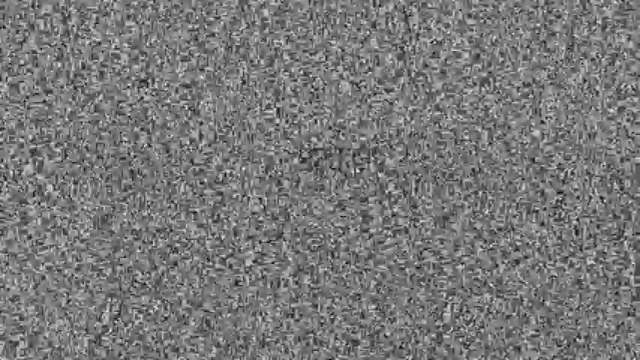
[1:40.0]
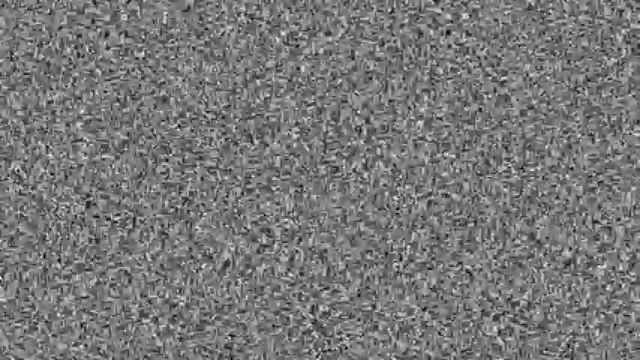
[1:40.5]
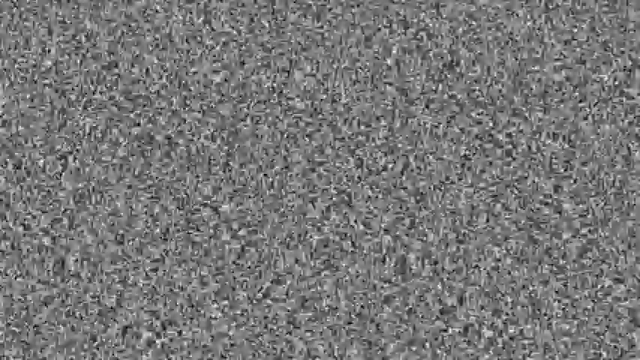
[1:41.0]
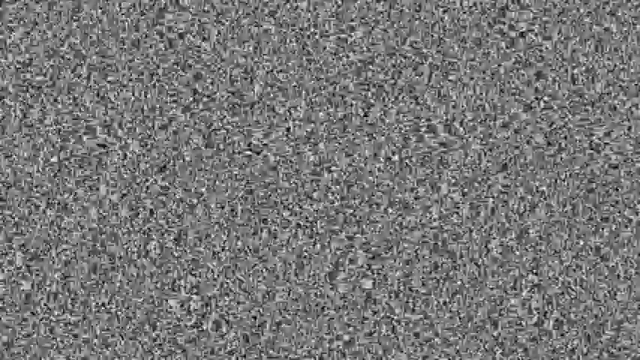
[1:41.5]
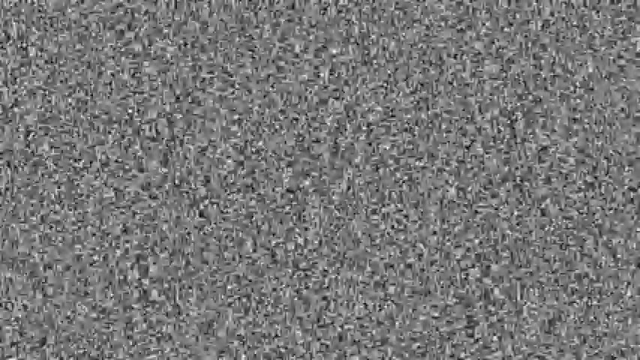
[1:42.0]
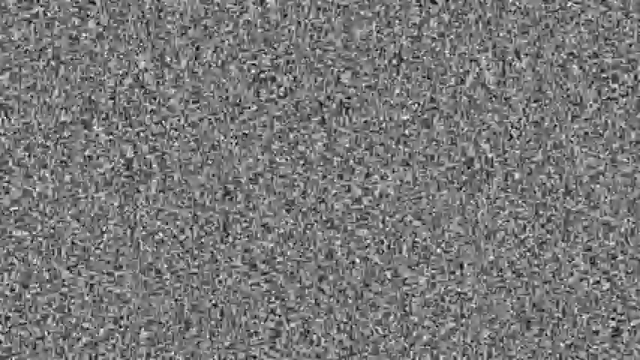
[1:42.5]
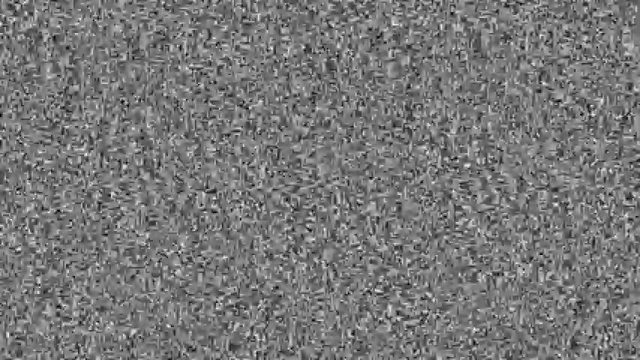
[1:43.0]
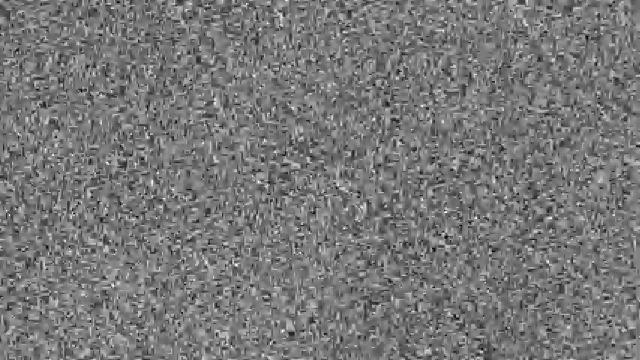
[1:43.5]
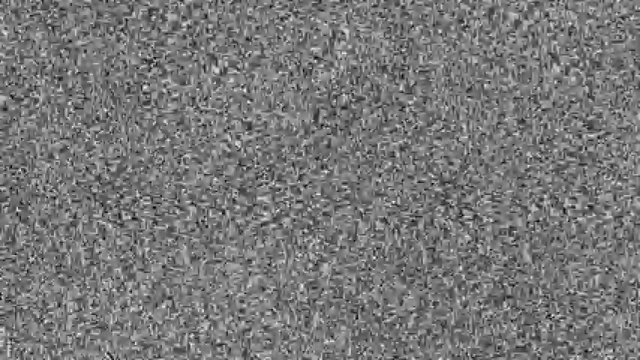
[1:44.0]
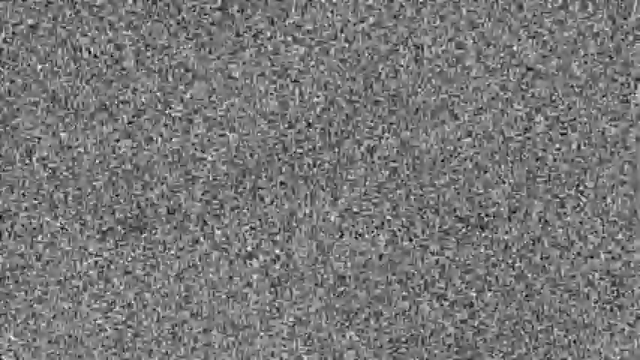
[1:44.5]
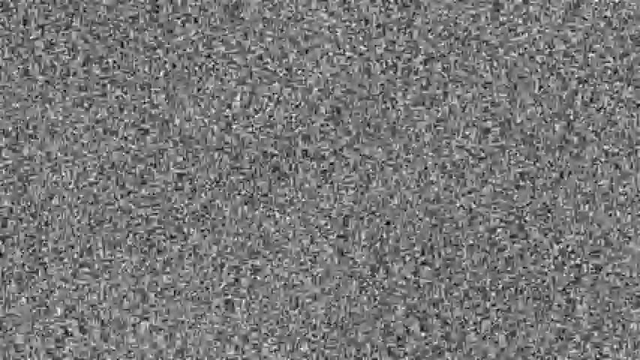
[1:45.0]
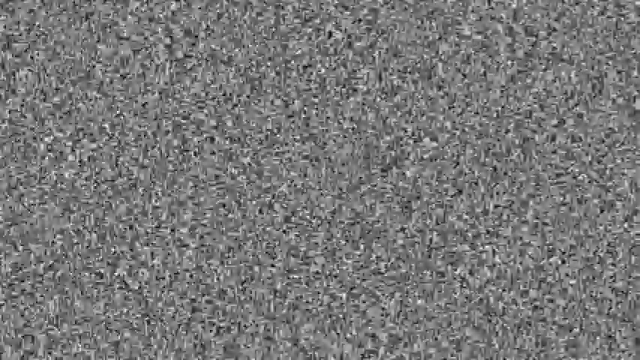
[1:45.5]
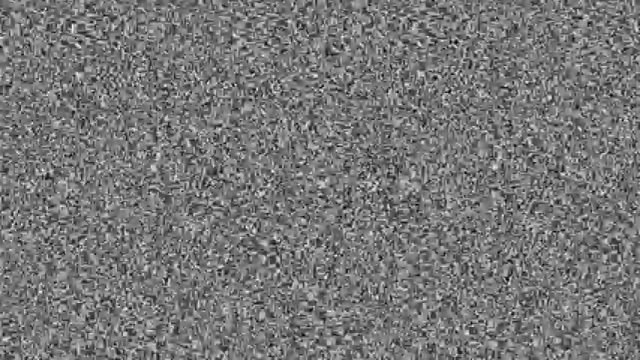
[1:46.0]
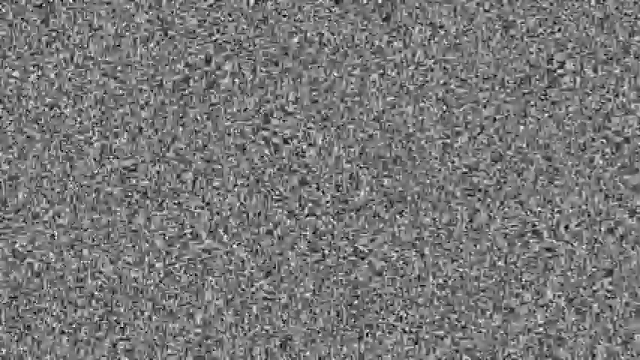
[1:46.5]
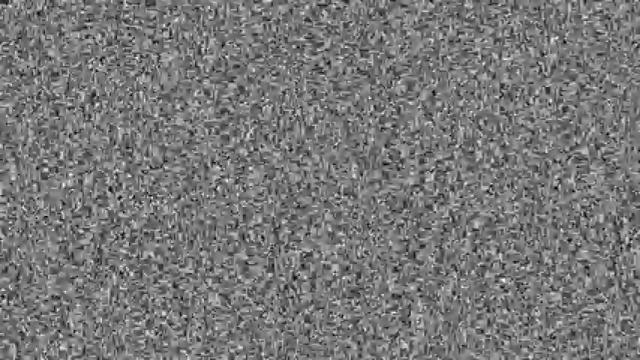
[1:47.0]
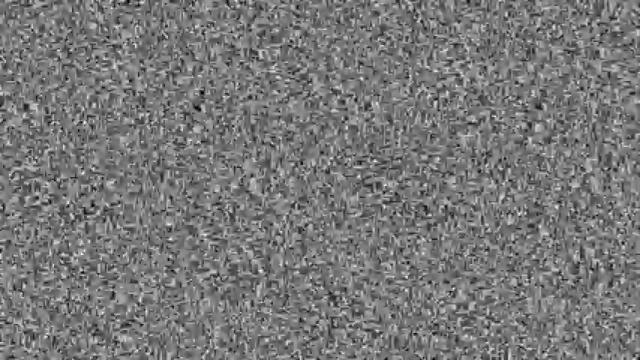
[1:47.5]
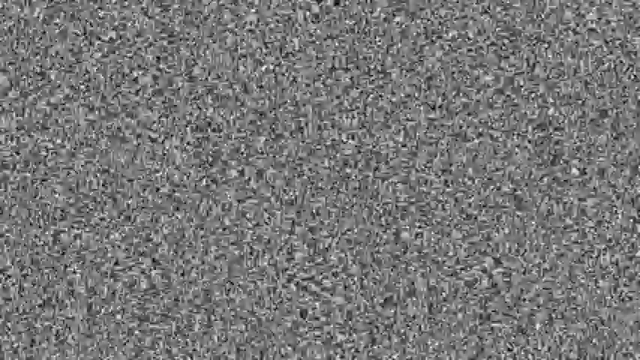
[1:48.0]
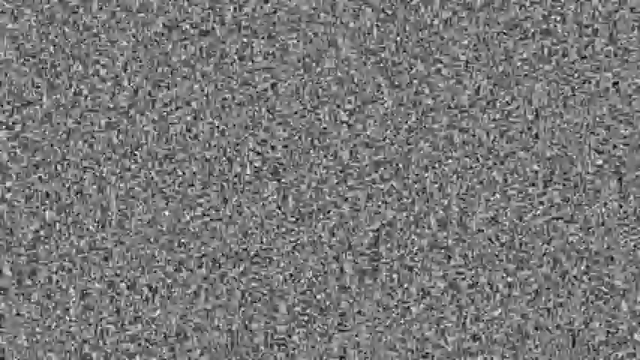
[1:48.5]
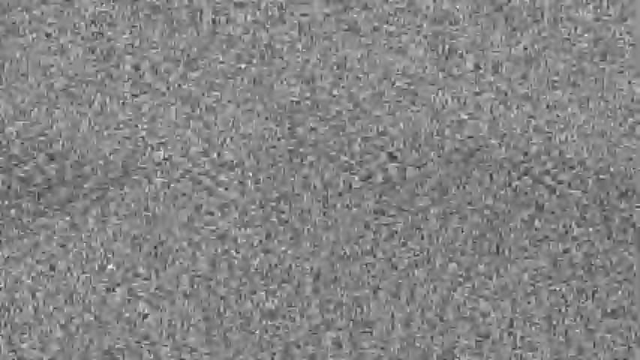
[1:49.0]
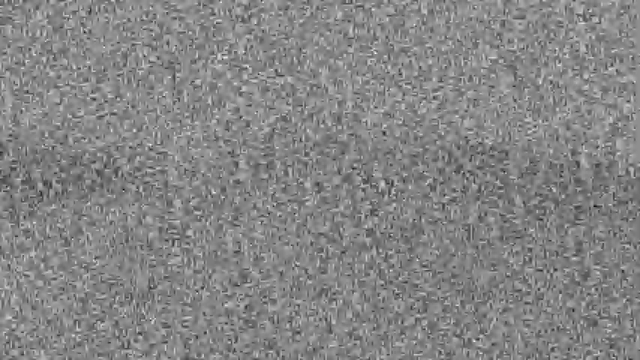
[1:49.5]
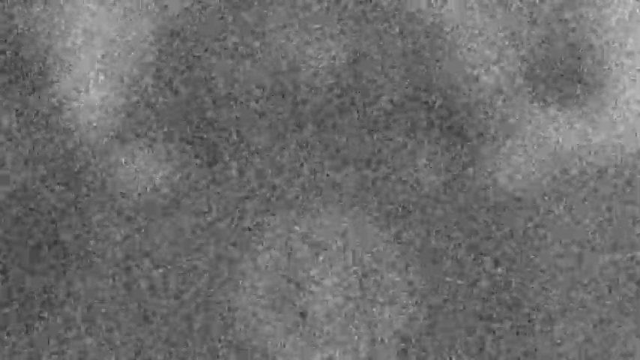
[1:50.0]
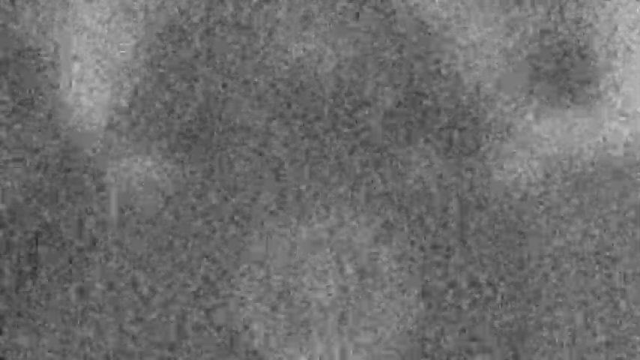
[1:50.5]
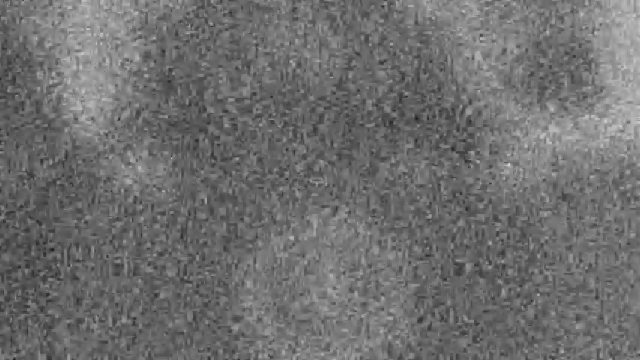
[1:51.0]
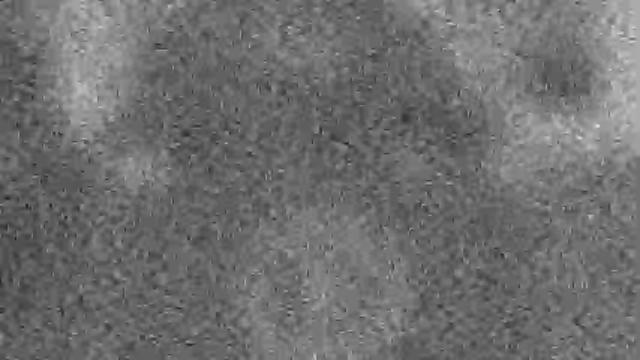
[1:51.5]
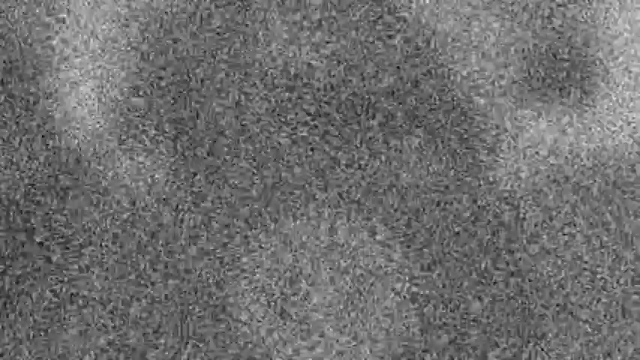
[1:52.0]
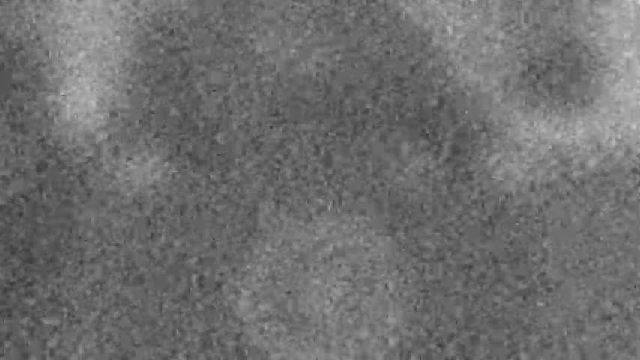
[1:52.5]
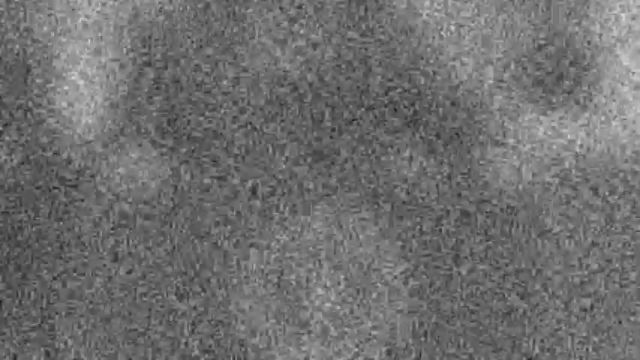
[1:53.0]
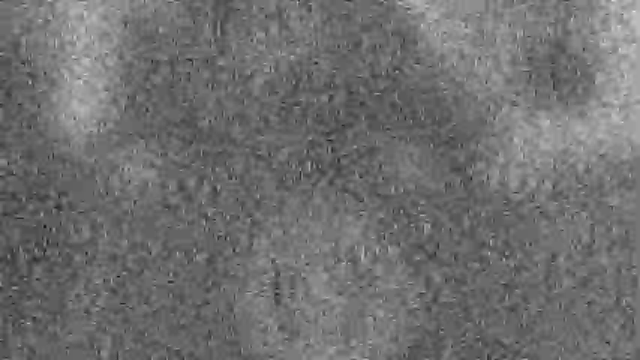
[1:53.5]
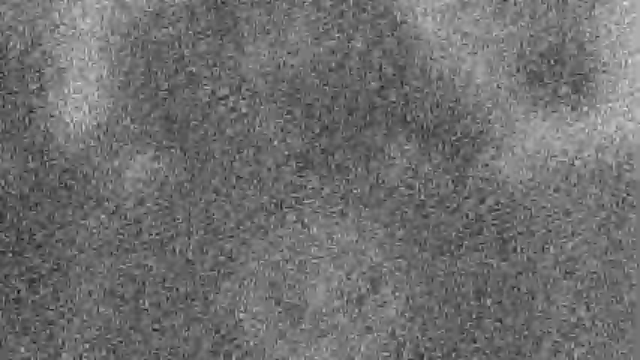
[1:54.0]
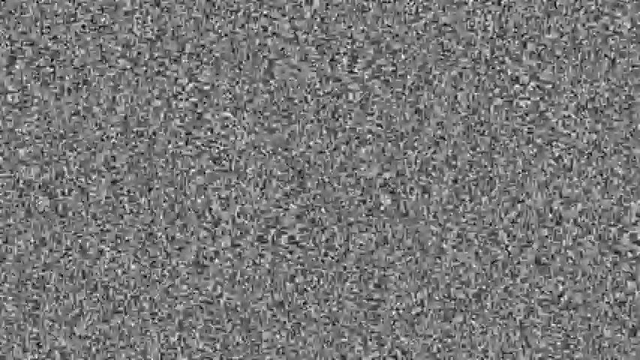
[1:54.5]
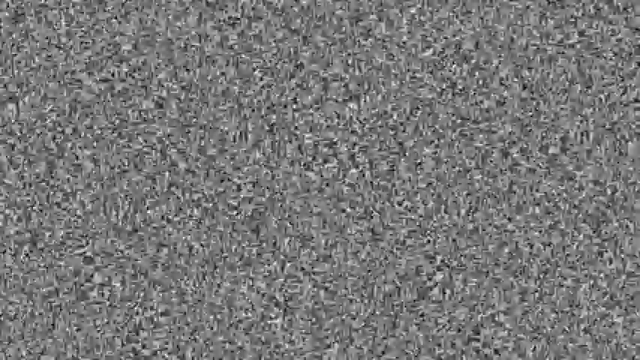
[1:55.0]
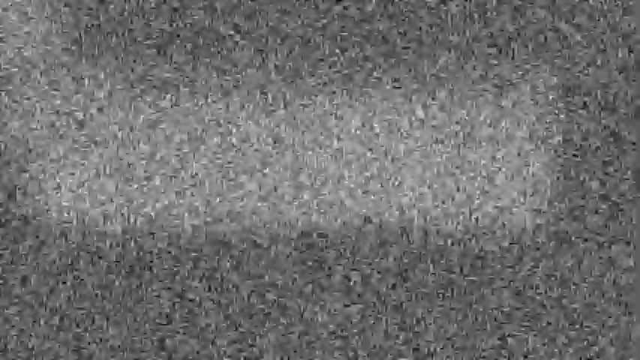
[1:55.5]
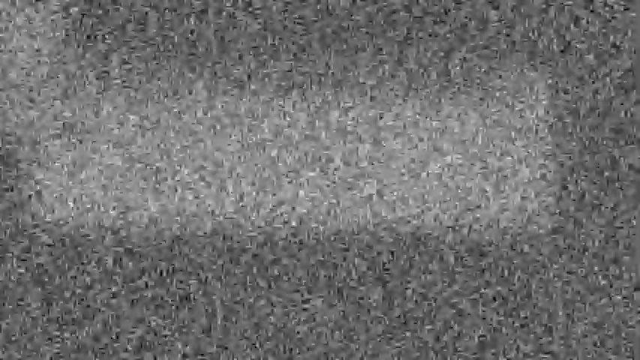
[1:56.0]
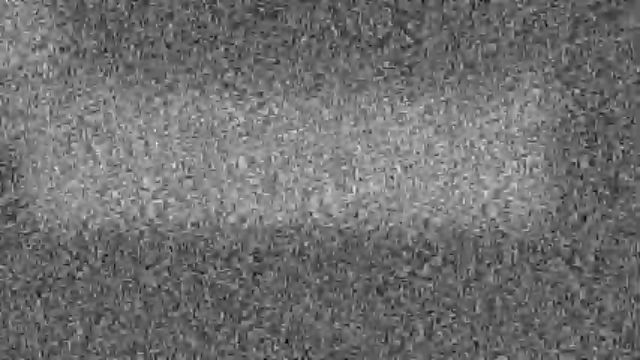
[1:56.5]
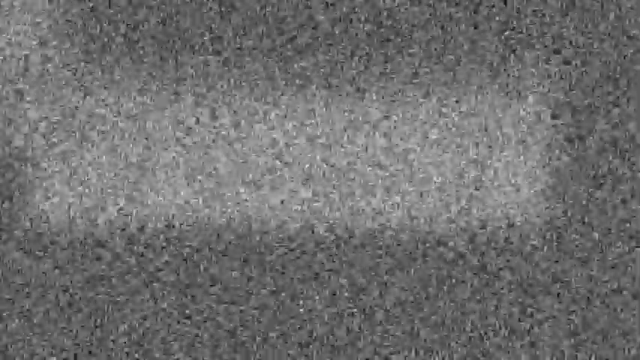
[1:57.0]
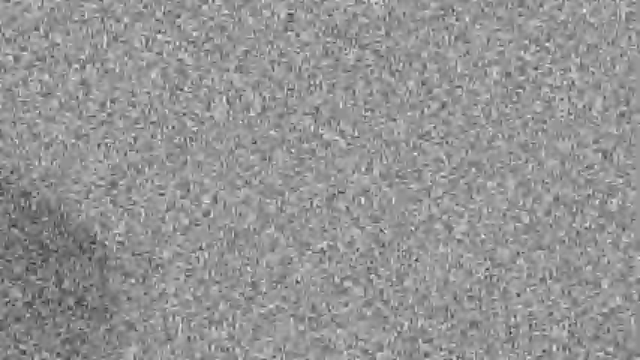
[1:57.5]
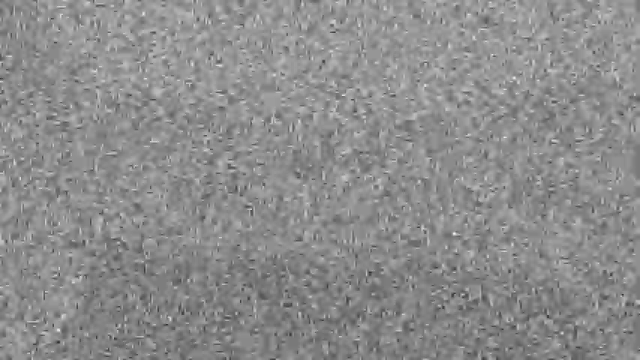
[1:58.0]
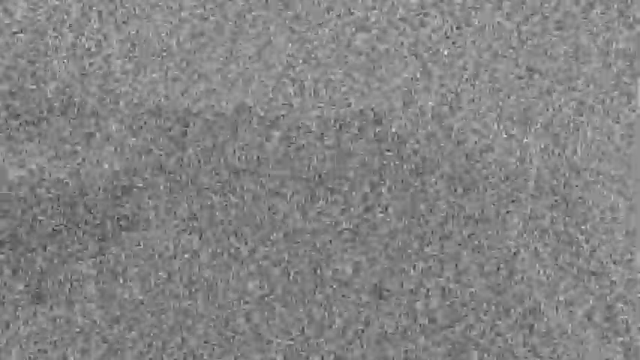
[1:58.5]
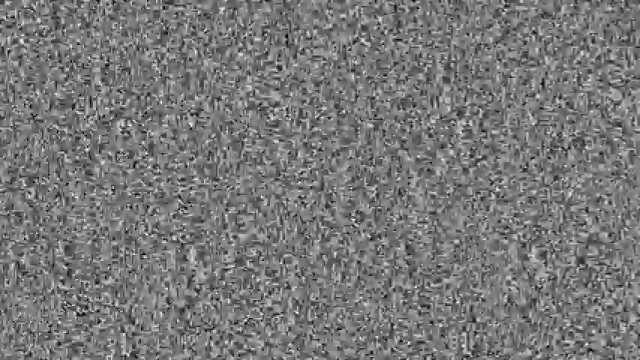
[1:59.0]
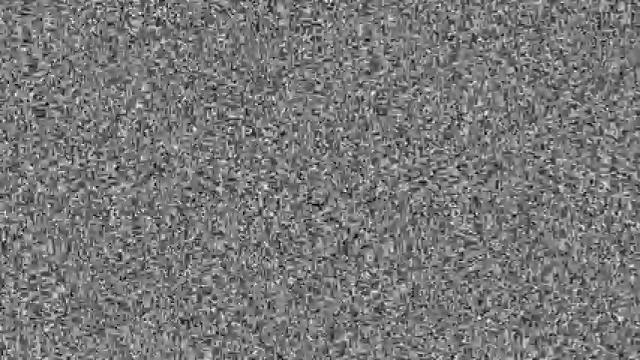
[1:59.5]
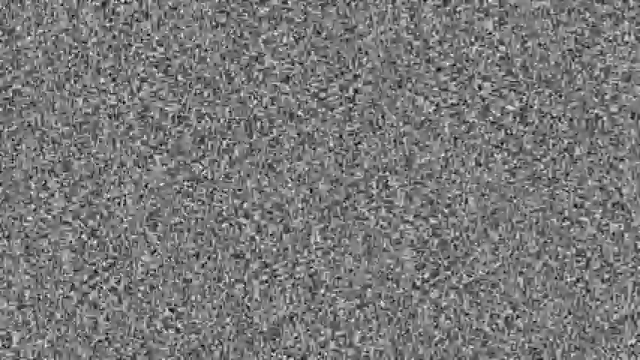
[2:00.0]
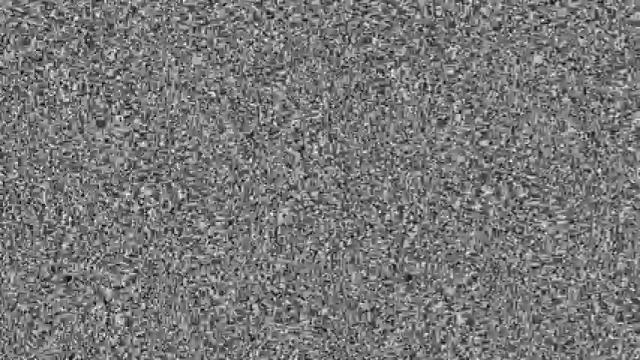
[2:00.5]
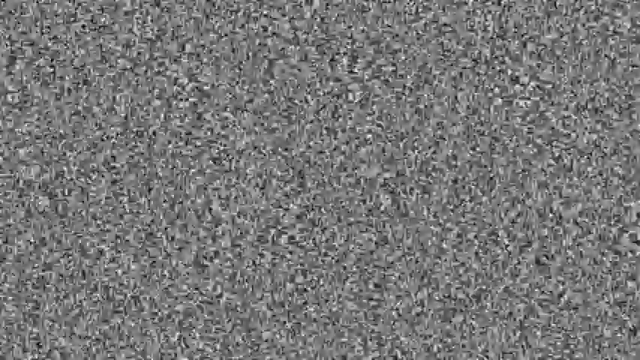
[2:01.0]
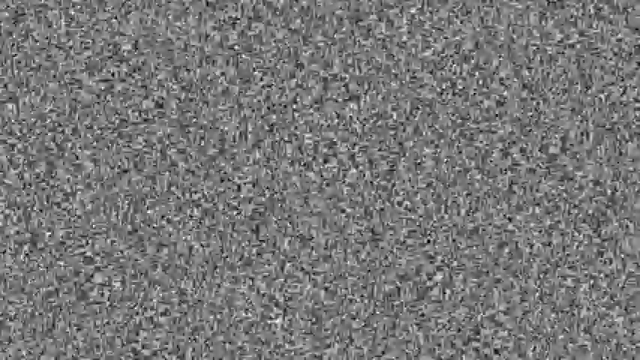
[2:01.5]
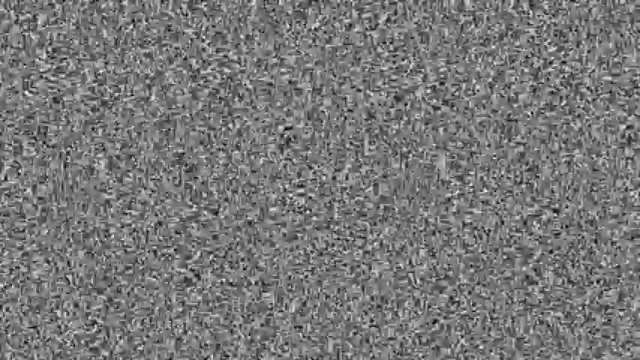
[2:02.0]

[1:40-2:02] Intense static continues, with no initial objects or shapes this time. The static fluctuates between different patterns, as if someone were changing the channel on a radio or an older model TV with knobs. A few very blurred images emerge, silhouettes of possible figures: one looks like a domed head, another like a long rectangle-like figure. They fade out and the static returns to the same pattern, becoming very intense, then lightens slightly so that very small shapes can be made out, though nothing definitive because the static is too intense to make out anything or anyone. The intensity then continues.